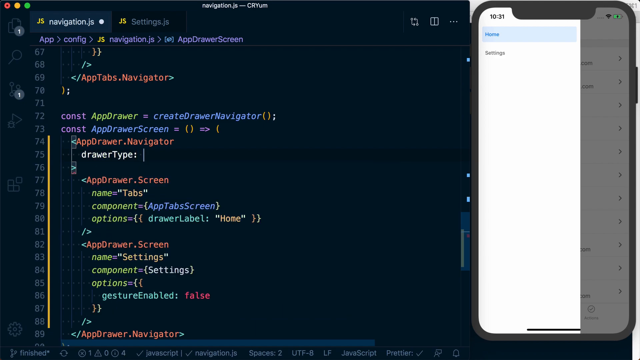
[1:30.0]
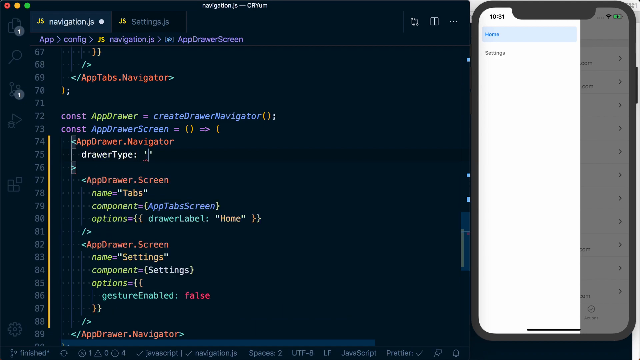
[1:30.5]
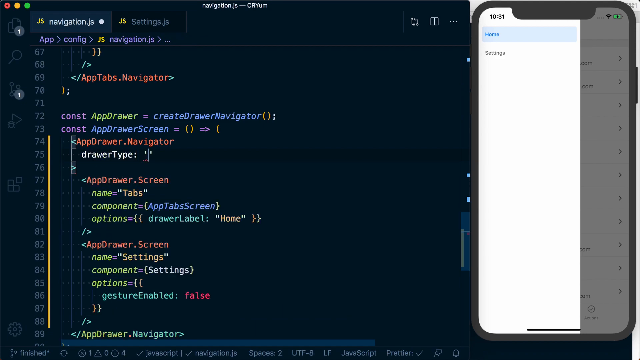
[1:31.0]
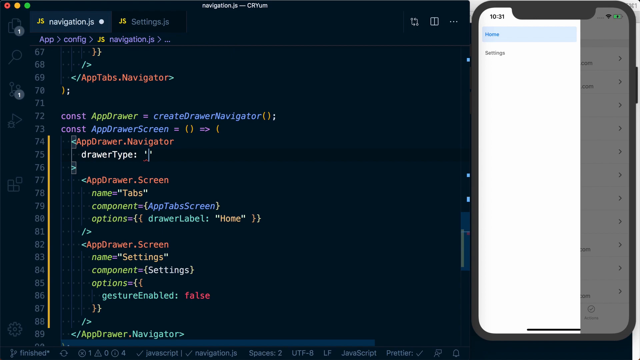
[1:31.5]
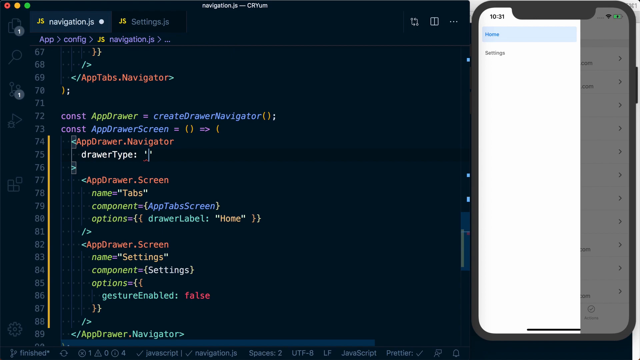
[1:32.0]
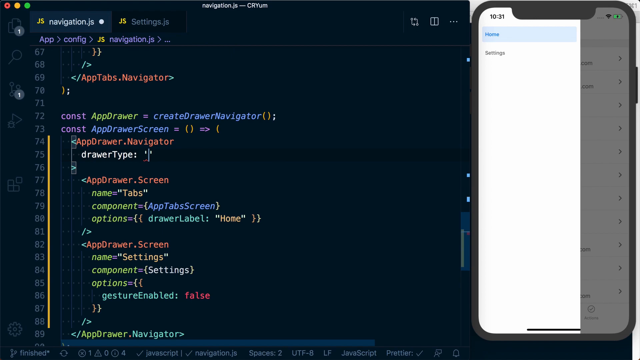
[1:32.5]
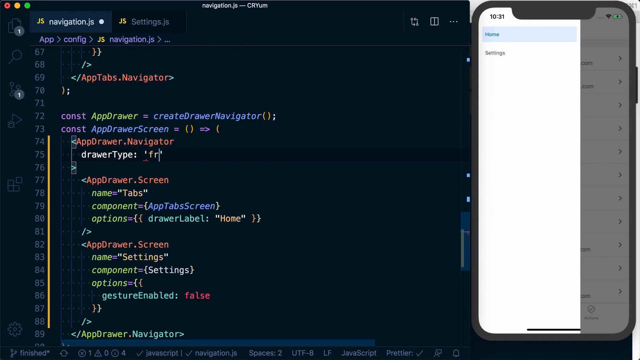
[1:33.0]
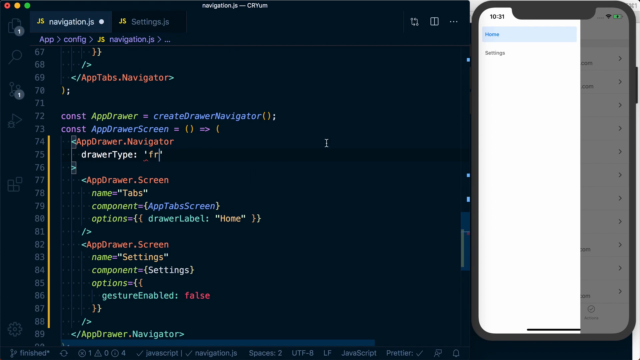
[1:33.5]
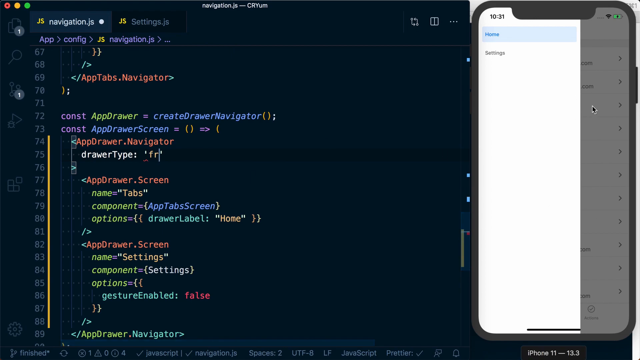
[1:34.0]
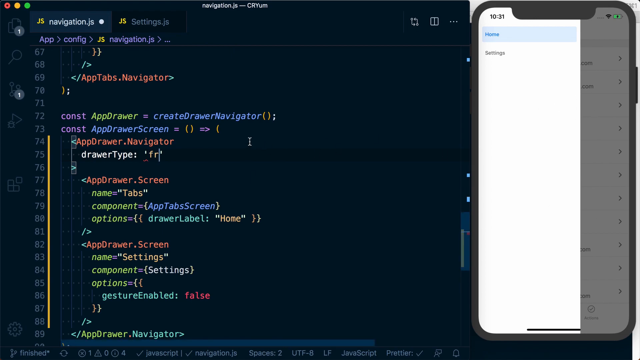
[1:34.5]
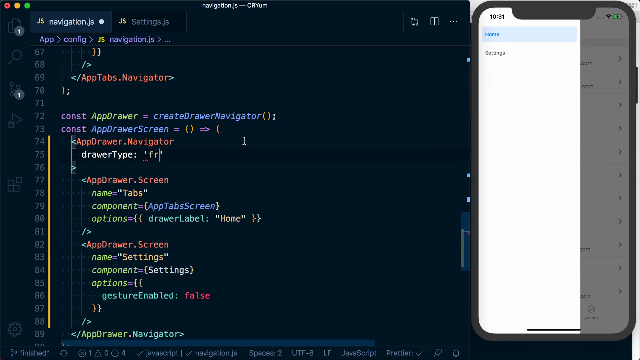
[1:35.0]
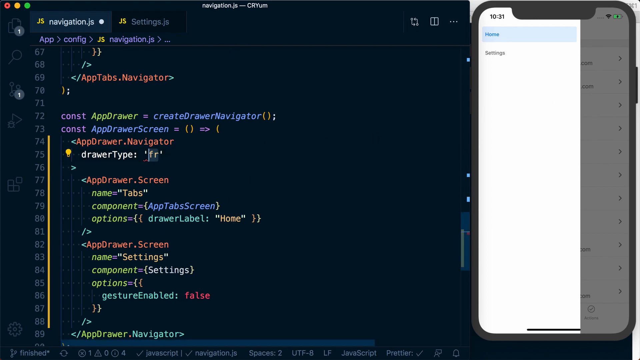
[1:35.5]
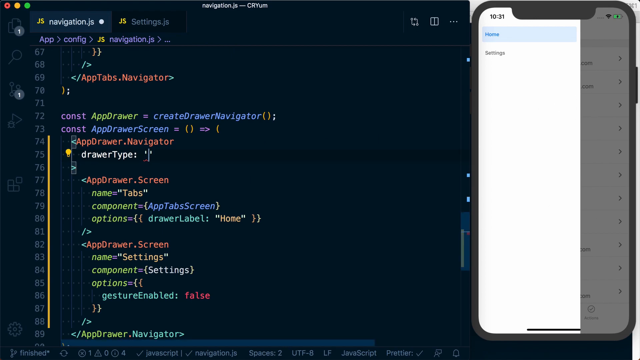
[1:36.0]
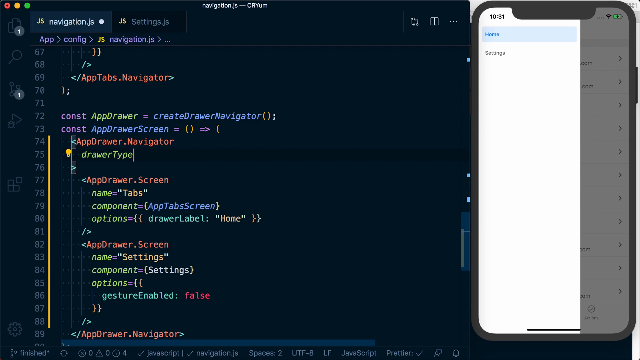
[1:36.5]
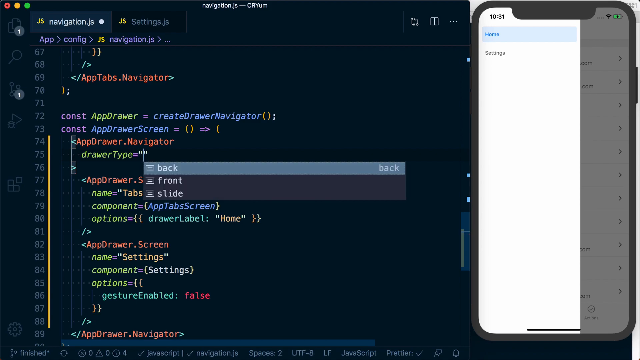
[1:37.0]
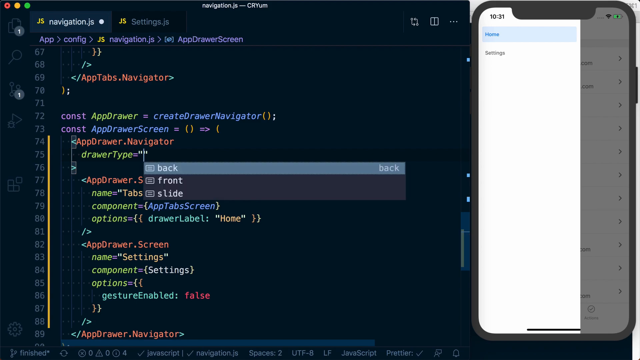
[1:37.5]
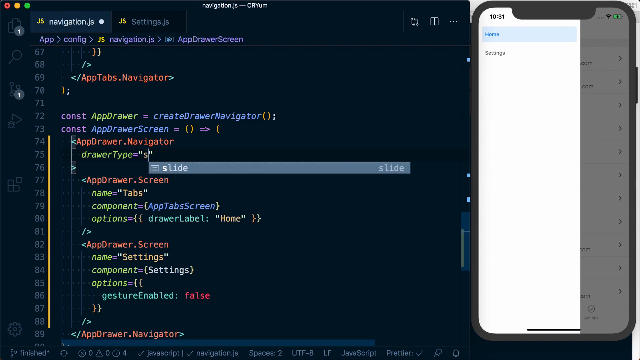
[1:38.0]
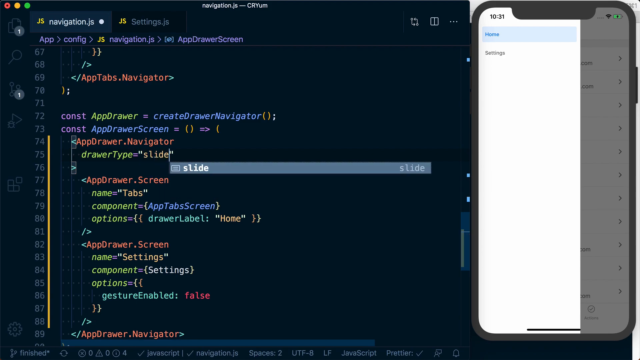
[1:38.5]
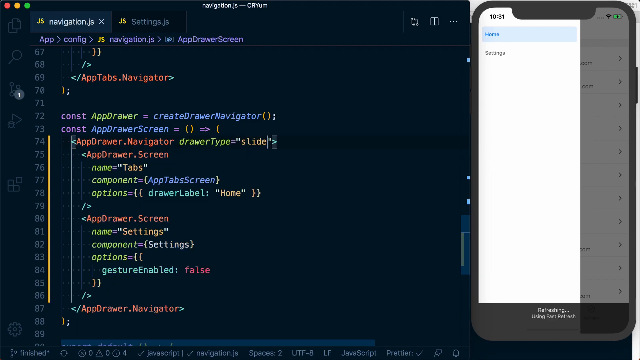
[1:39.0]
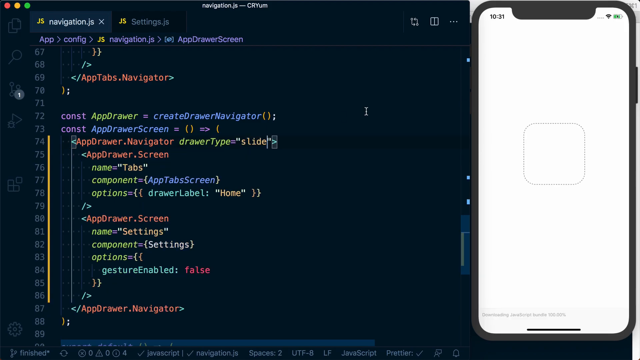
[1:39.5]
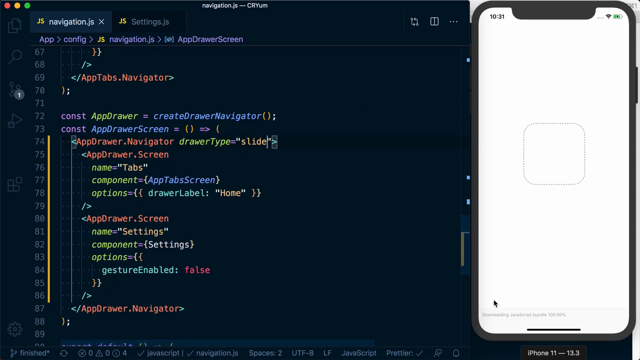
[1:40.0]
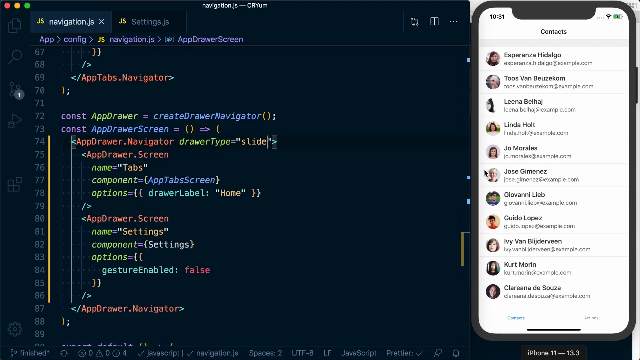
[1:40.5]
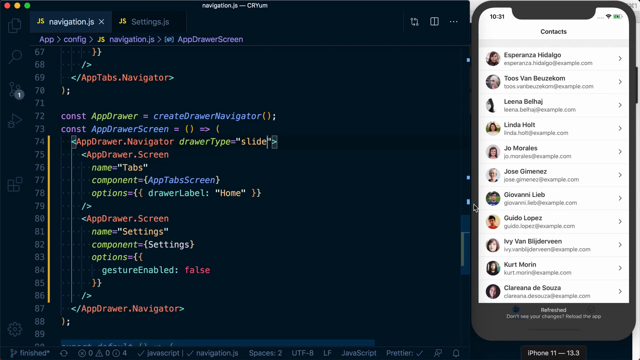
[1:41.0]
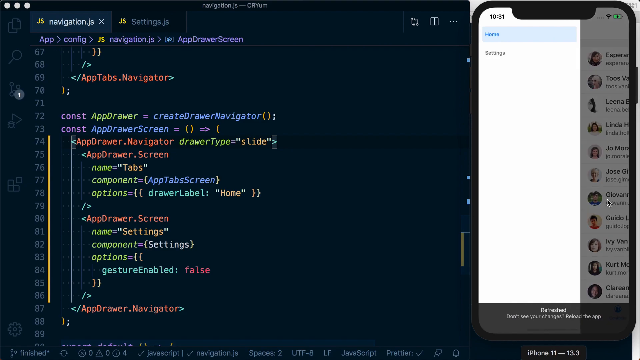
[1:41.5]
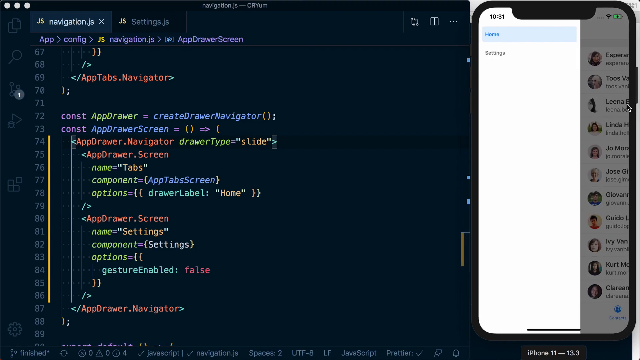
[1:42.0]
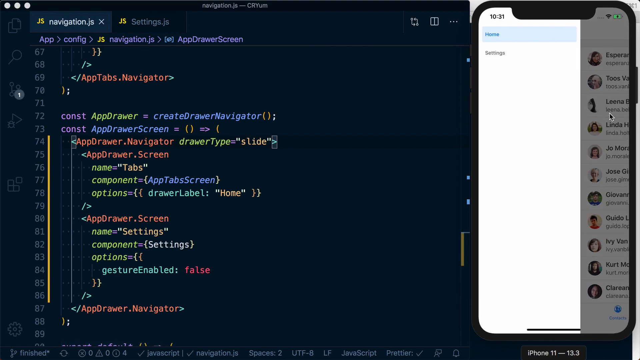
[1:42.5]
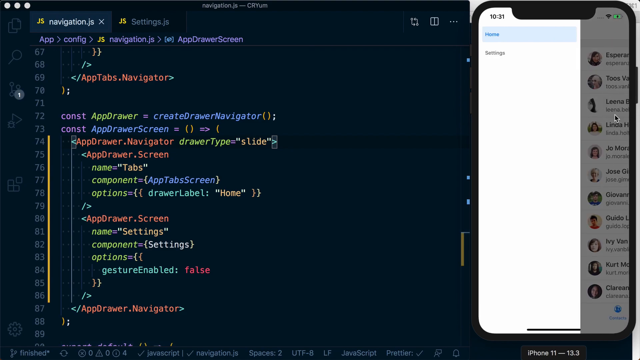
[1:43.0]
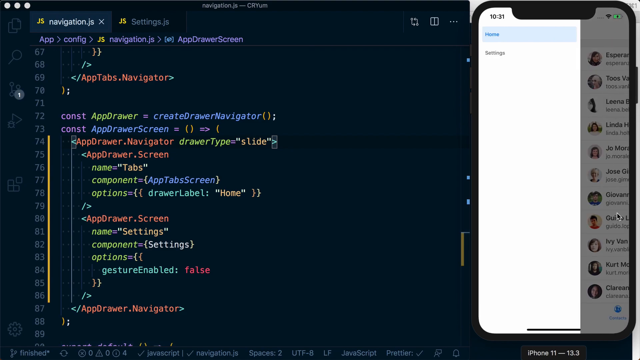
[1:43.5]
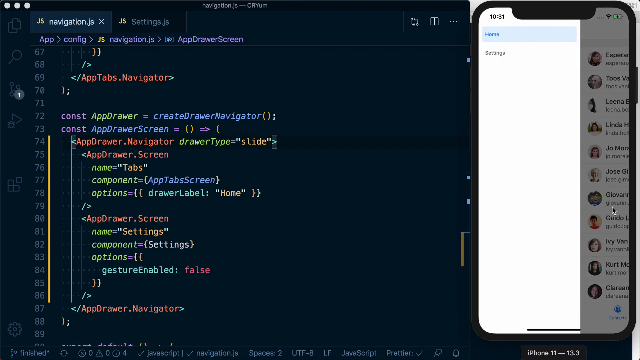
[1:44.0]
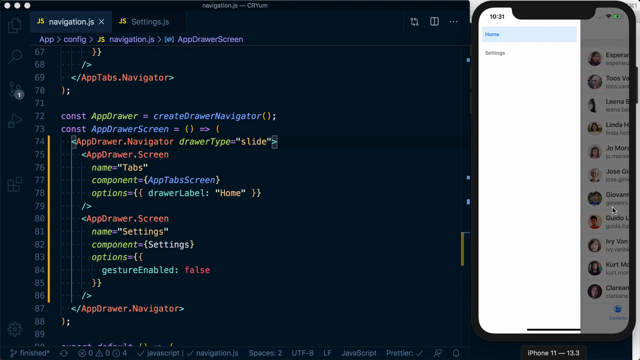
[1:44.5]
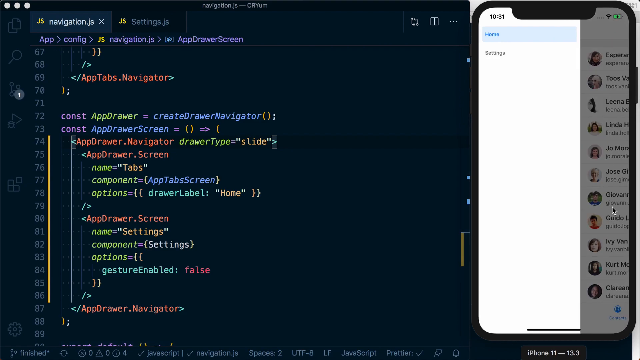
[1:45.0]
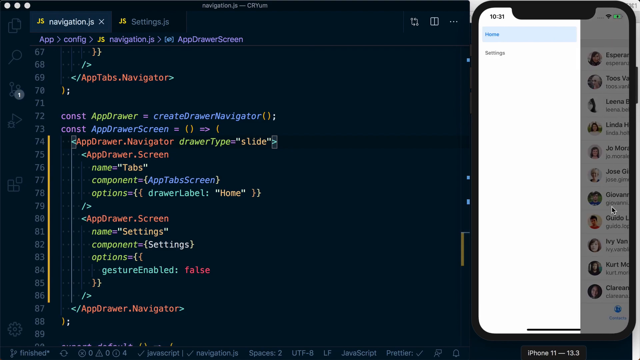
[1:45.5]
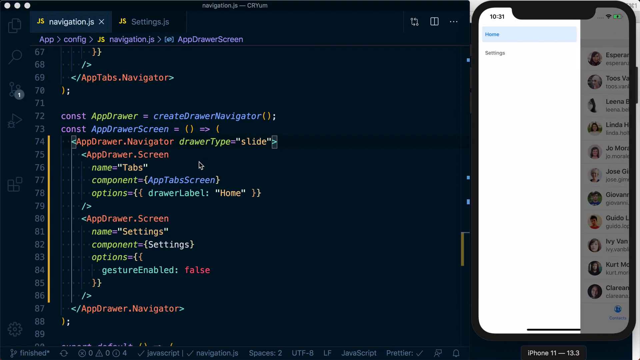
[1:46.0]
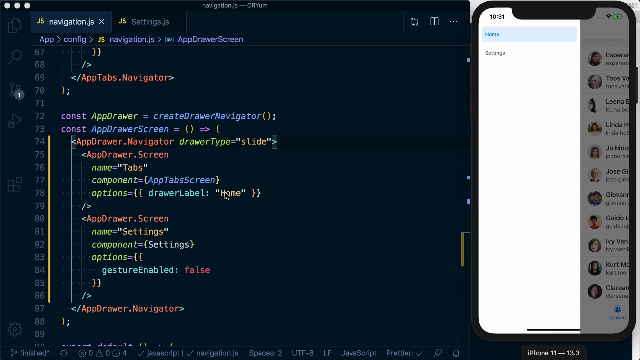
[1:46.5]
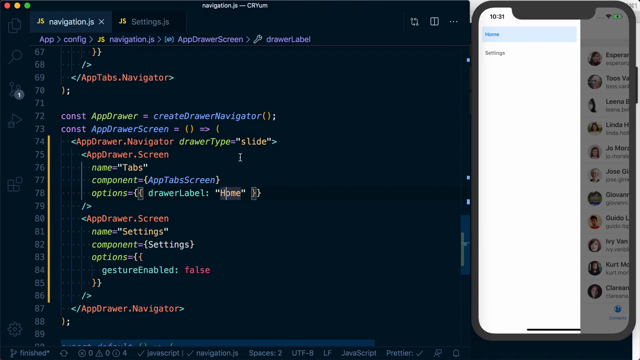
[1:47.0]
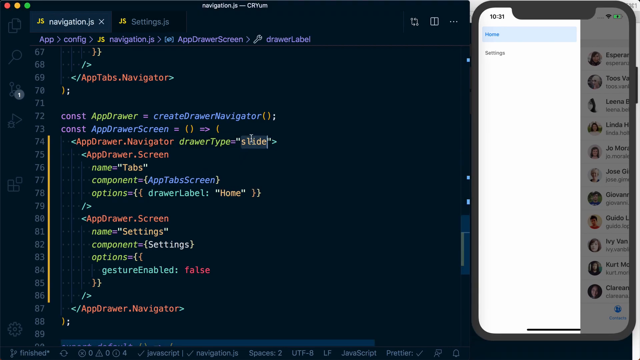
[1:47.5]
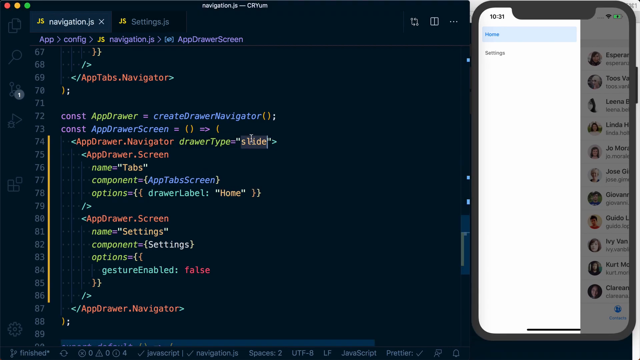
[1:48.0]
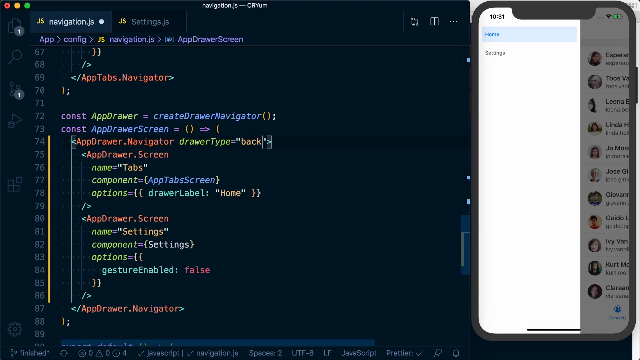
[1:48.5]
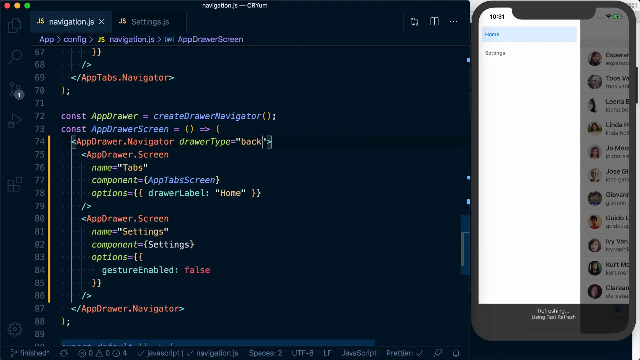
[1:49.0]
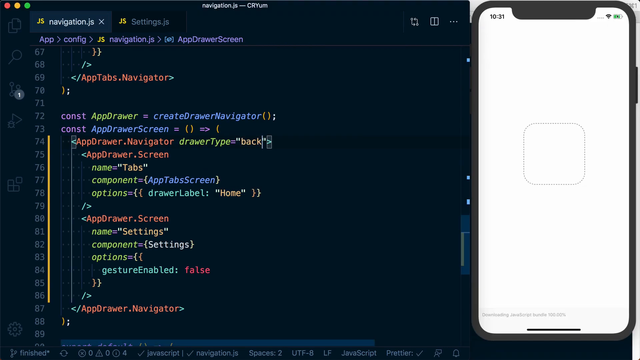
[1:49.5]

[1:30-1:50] Somebody shows code on the black screen of a computer, starting at line 67 and going down into the 80s, with "navigation.js-cryum" at the very top. The code on the left is in four colors: purple, orange, blue and lime green. On the right-hand side their phone is shown, with the home part highlighted in blue. The cursor moves around in the middle of the code and clicks on something, then the phone goes back to the contacts, then back to home, and the cursor returns to the code, where it erases something and writes it back. Whenever the person clicks in the code, a pop-up showing different code can appear, which seems to be a shortcut for typing quickly. The person is changing some of the code.